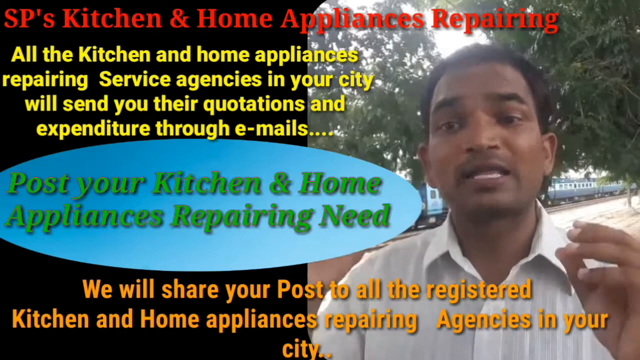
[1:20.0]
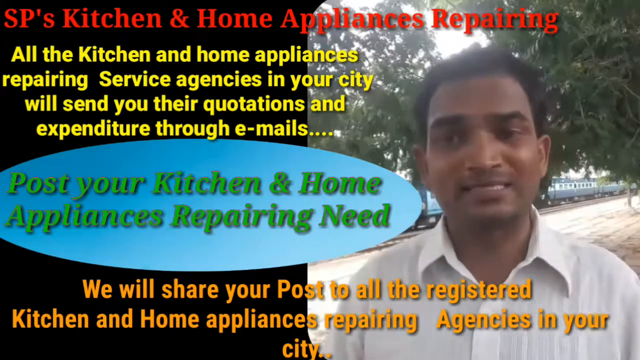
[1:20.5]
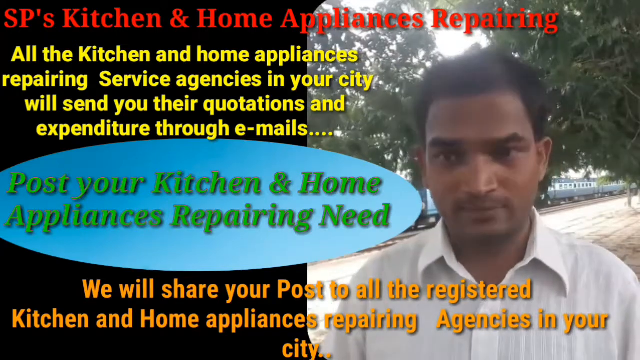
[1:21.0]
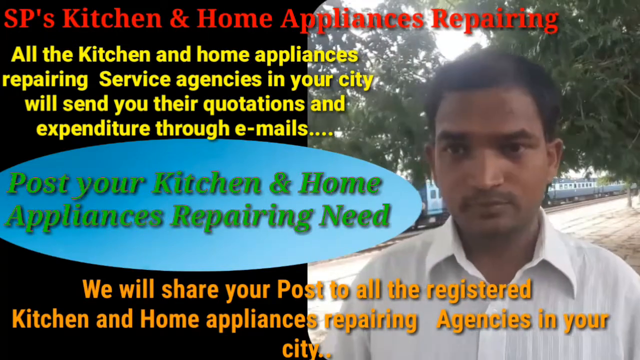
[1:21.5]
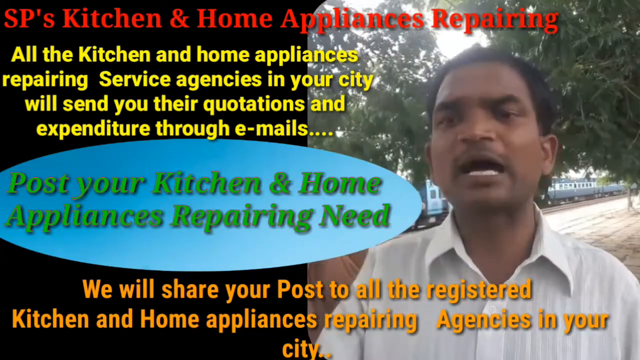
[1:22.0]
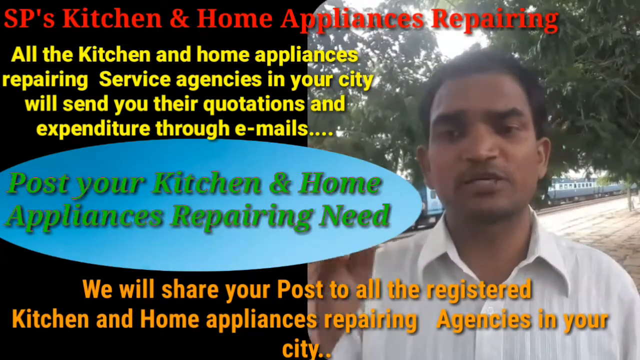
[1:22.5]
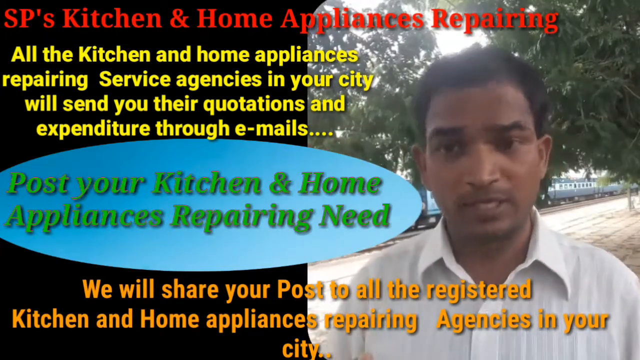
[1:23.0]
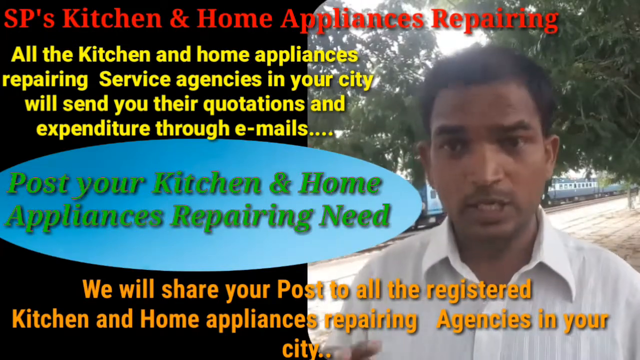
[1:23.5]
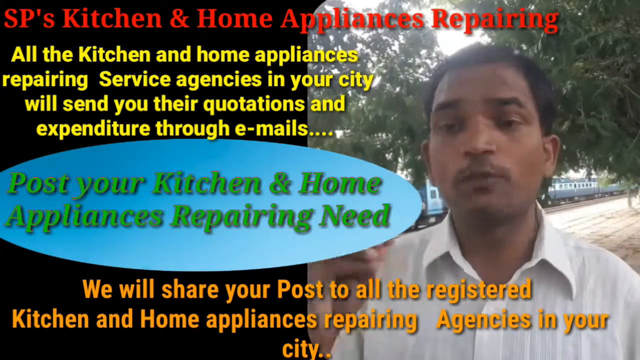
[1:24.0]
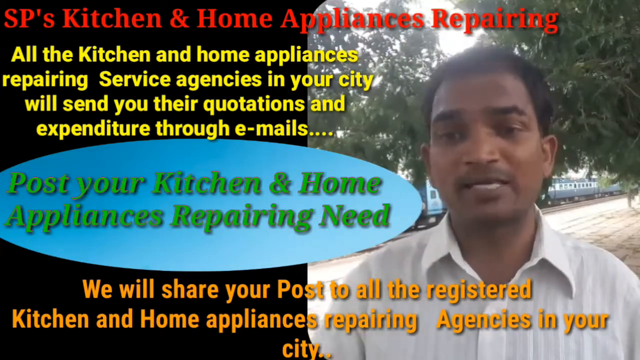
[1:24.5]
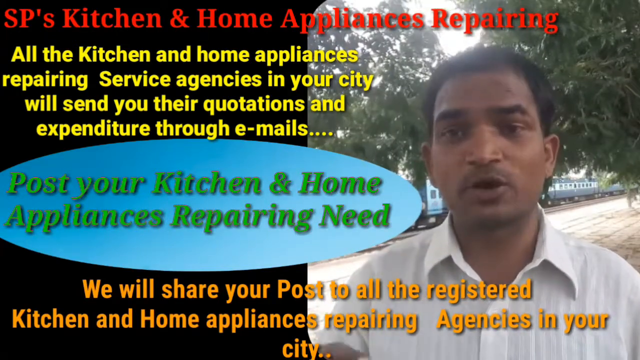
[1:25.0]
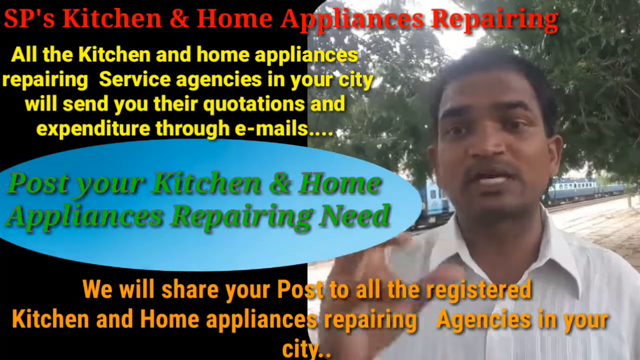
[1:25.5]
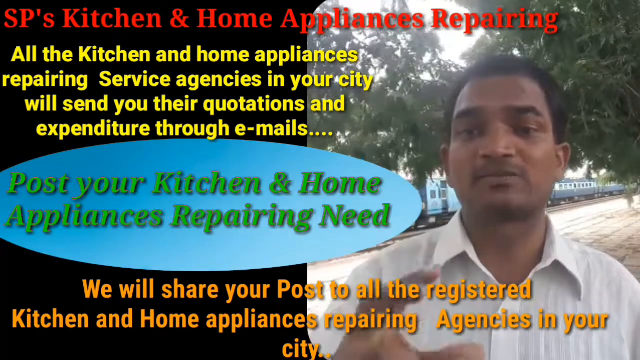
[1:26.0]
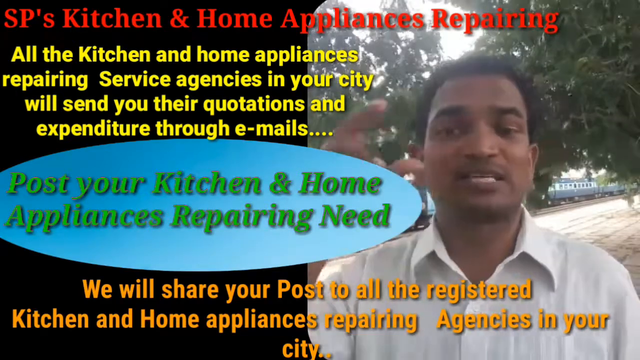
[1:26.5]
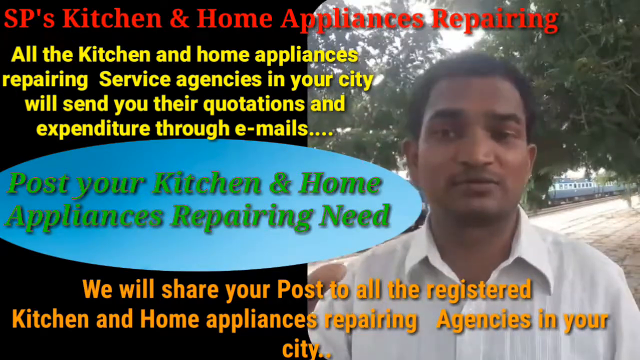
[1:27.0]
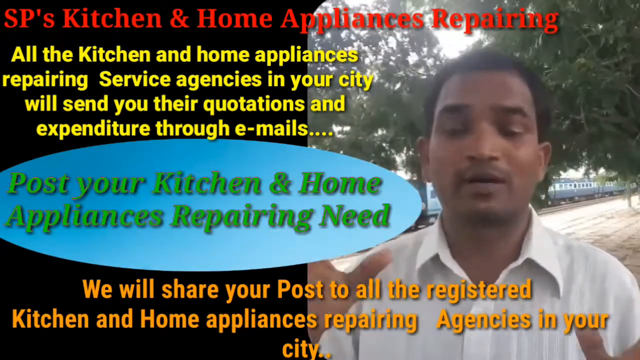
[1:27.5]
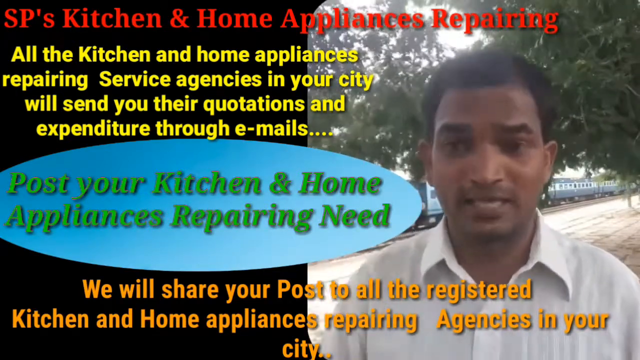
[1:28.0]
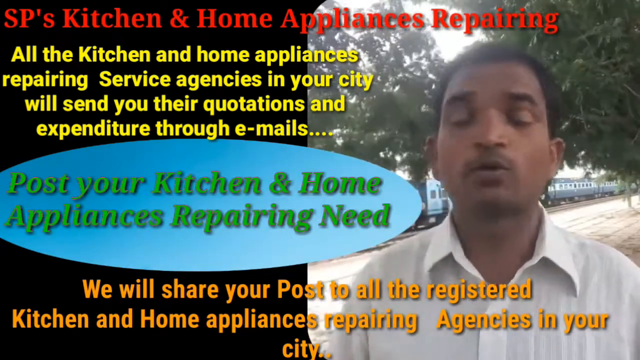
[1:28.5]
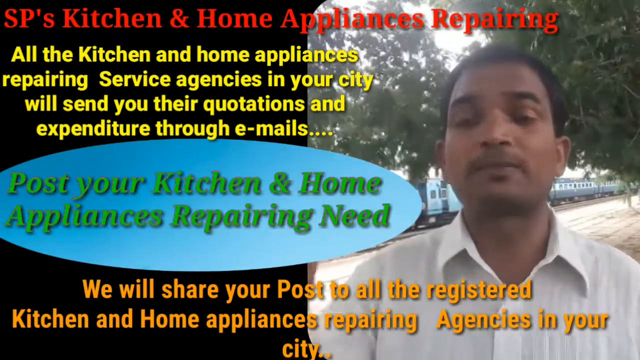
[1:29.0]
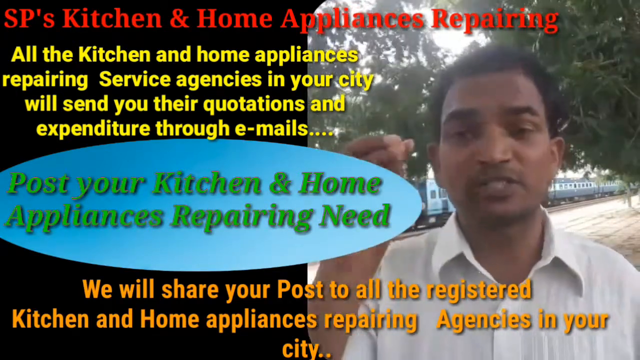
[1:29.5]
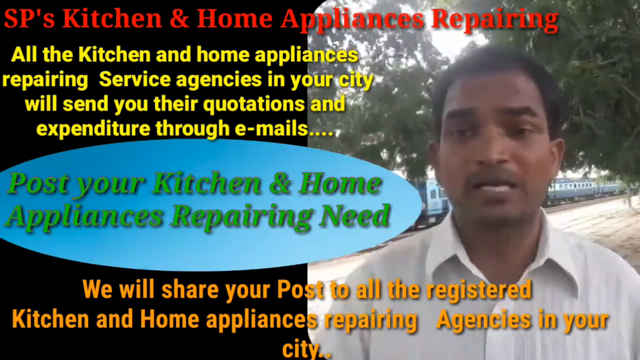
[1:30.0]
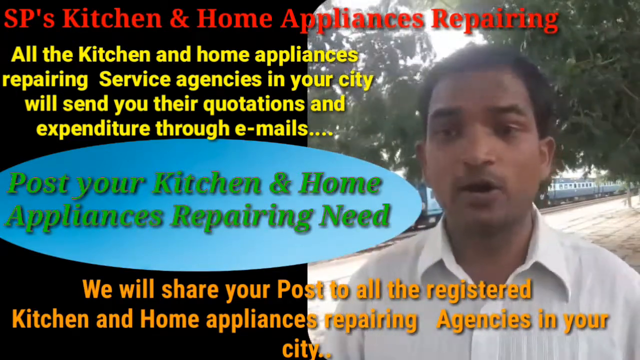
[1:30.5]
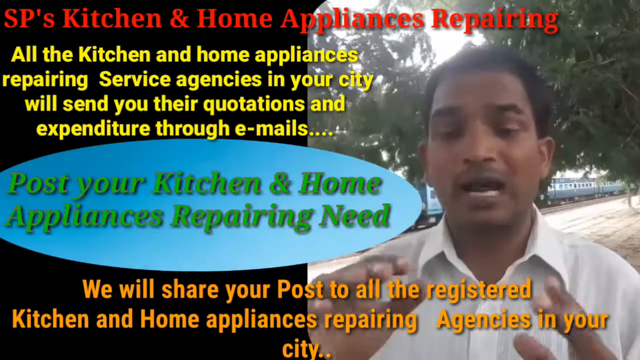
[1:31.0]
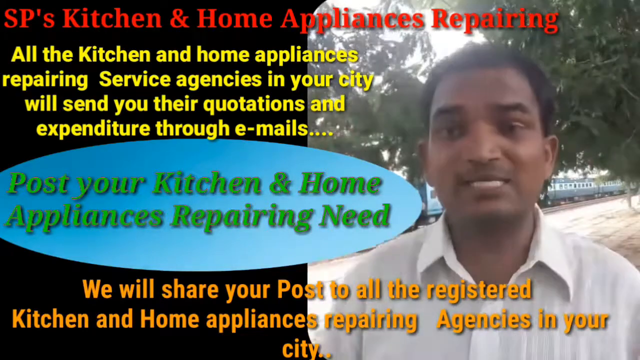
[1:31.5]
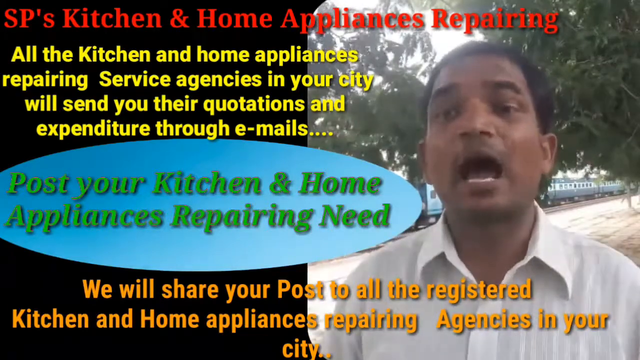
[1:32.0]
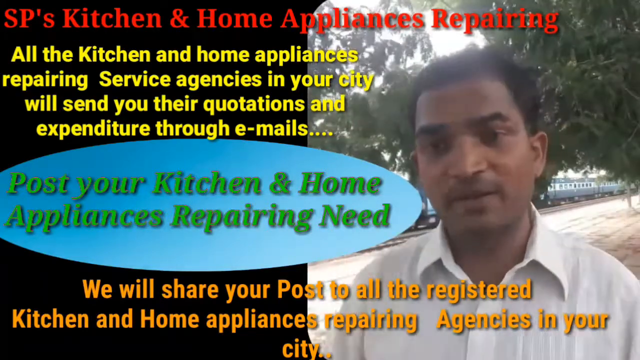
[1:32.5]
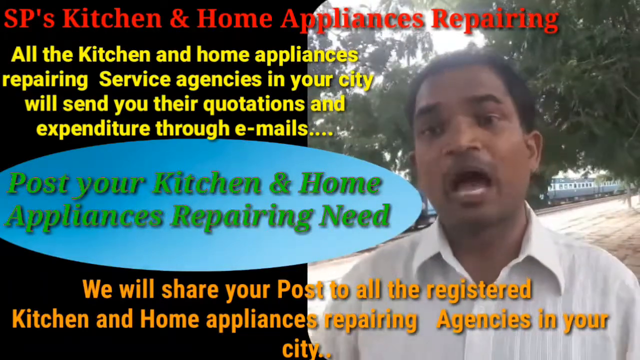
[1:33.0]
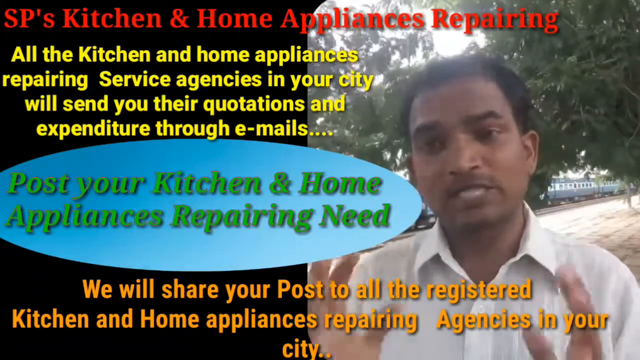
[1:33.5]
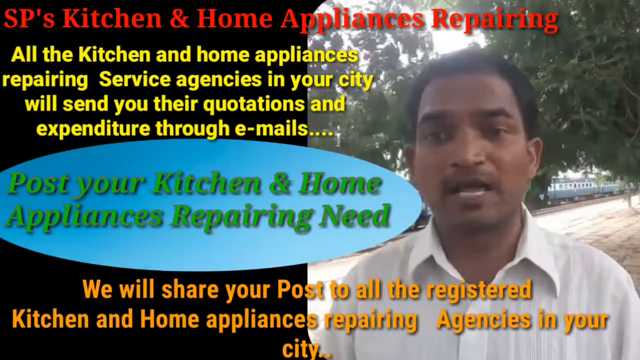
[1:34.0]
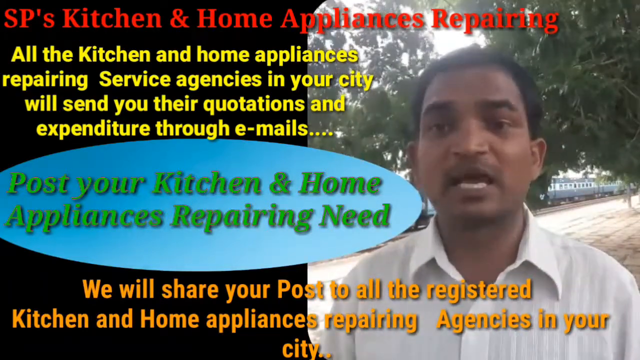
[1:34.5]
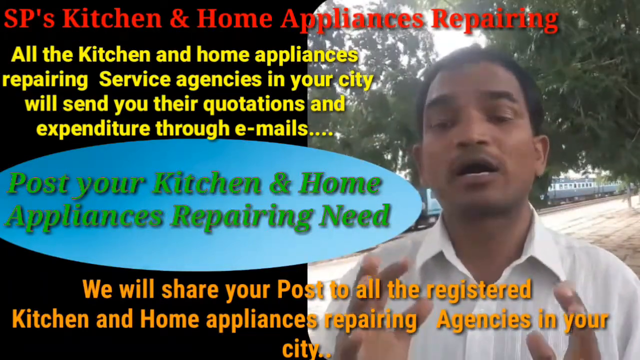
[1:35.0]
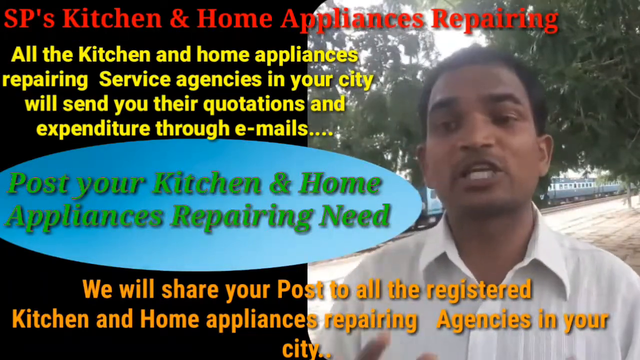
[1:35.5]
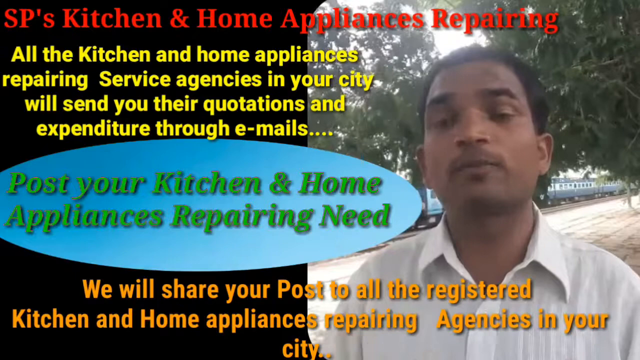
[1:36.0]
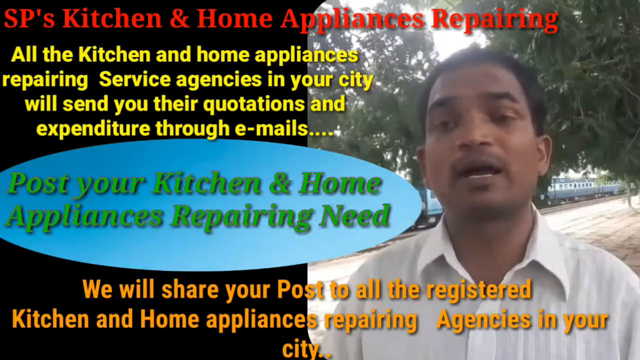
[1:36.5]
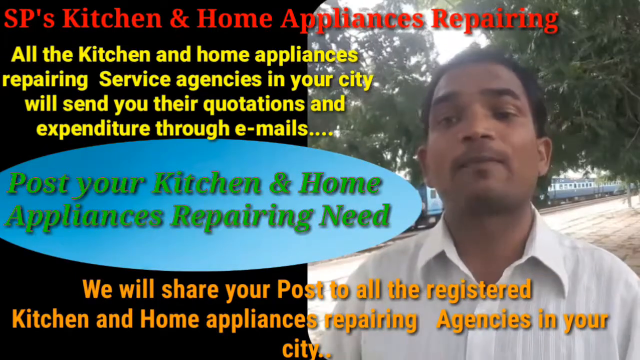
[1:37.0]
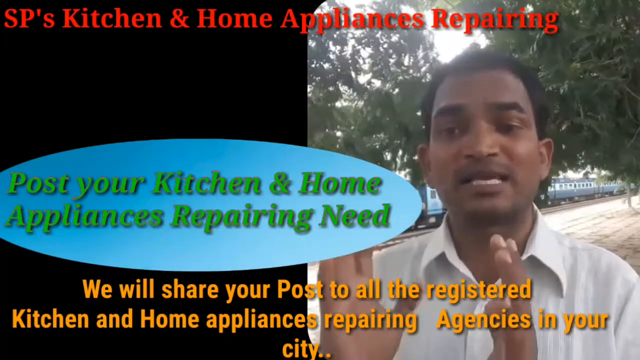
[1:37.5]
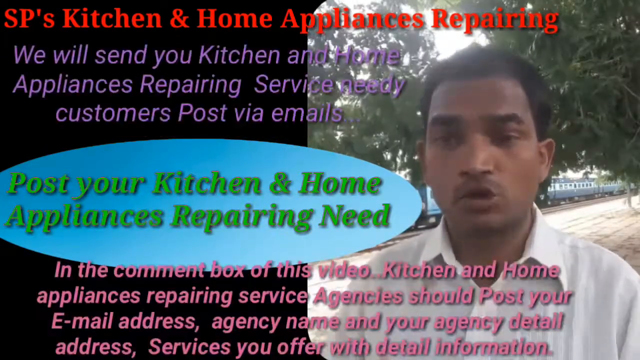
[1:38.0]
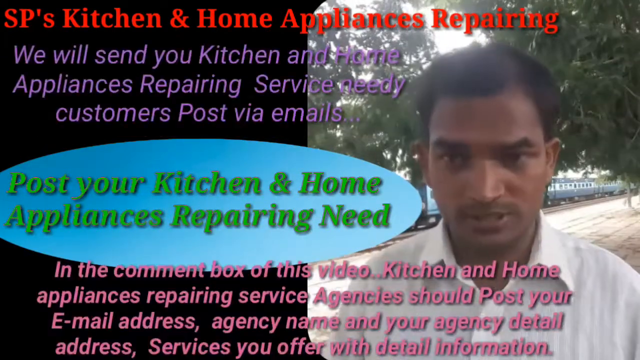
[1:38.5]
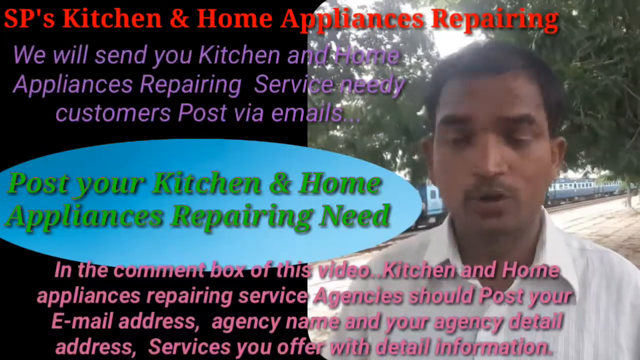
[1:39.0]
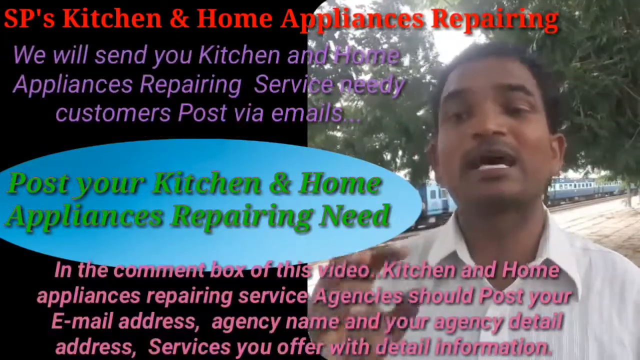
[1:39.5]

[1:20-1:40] A man appears to be outside, with foliage and trees behind him. To his right is a black background with a red headline reading "SP's kitchen and home appliances repairing." Below it, yellow text reads "all the kitchen and home appliances repairing service agencies in your city will send their quotations and expenditure through emails..." A blue oval contains green text reading "post your kitchen and home appliances repairing need," and below it orange text reads "we will share your post all registered kitchen and home appliances repairing agencies in your city..." The man seems to be talking about something possibly related to kitchen and home appliances, and the scene does not change for a while. Then the text changes, reading "we will send your kitchen and home appliances repairing services needy customers post via emails" and "in the comment box of this video kitchen and home appliances repairing service agencies should post your home address," before the text cuts off.